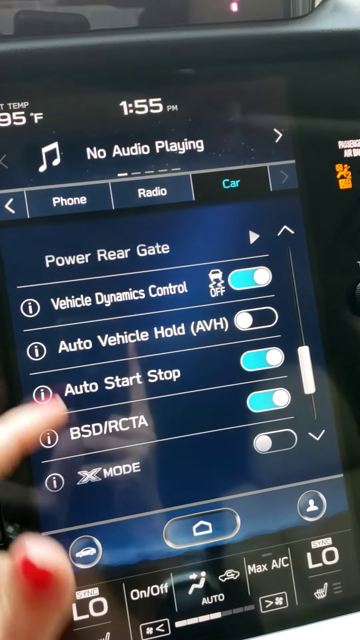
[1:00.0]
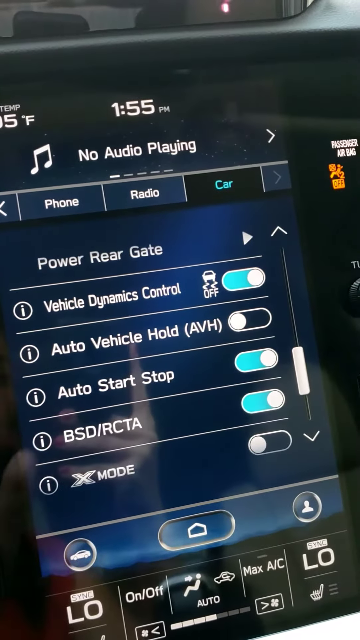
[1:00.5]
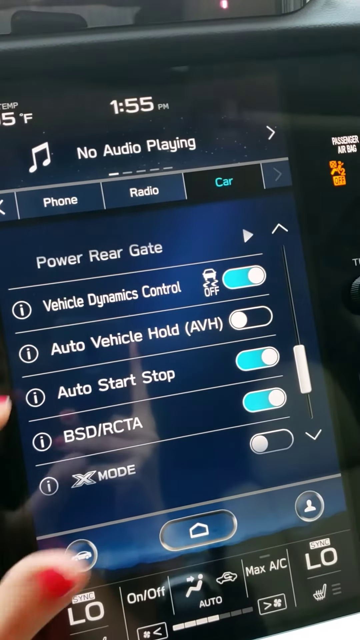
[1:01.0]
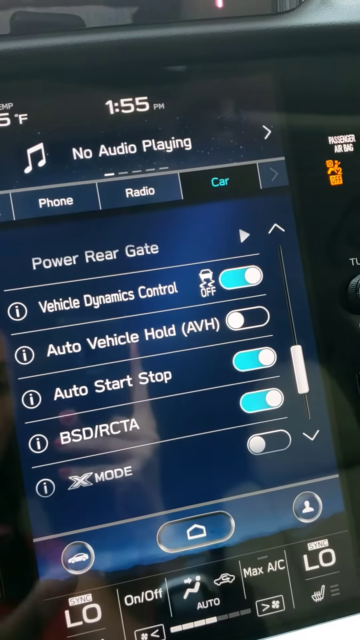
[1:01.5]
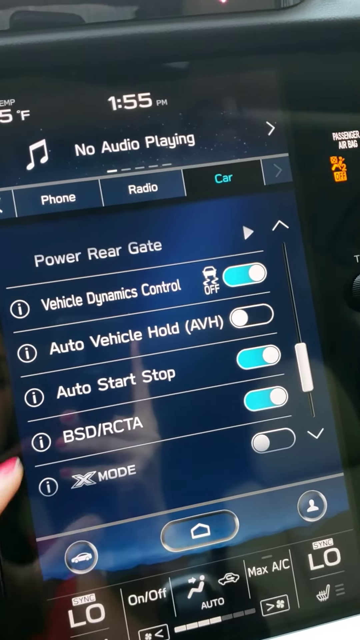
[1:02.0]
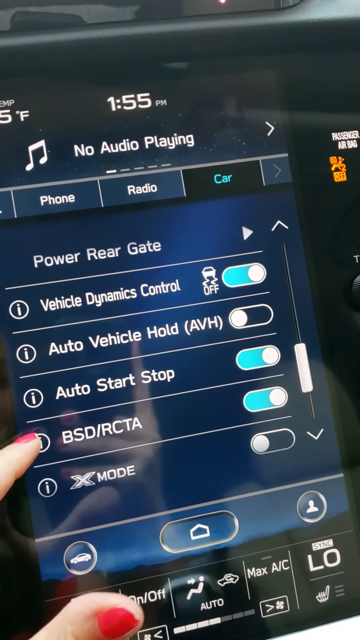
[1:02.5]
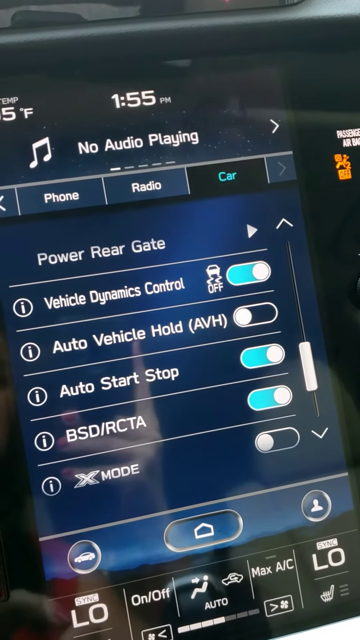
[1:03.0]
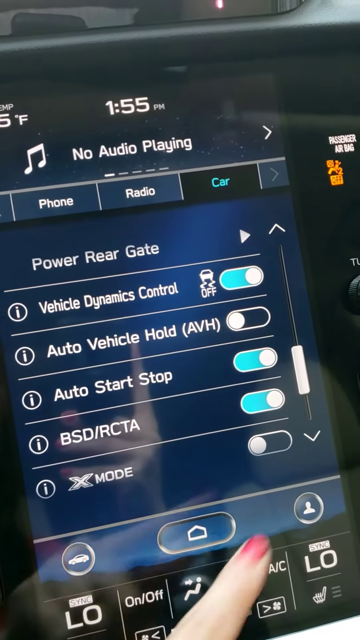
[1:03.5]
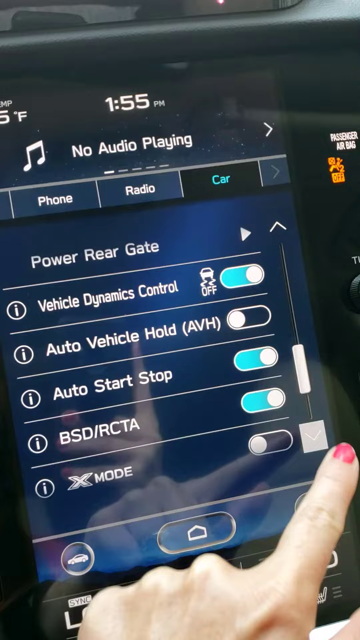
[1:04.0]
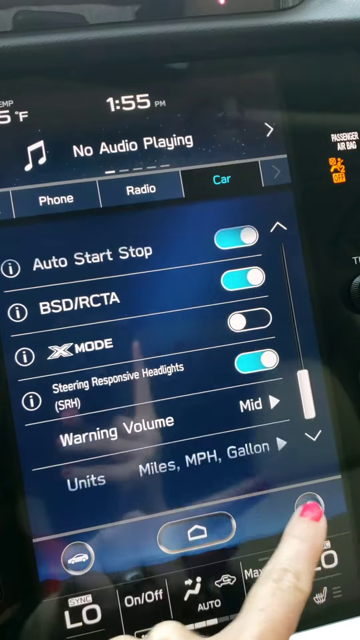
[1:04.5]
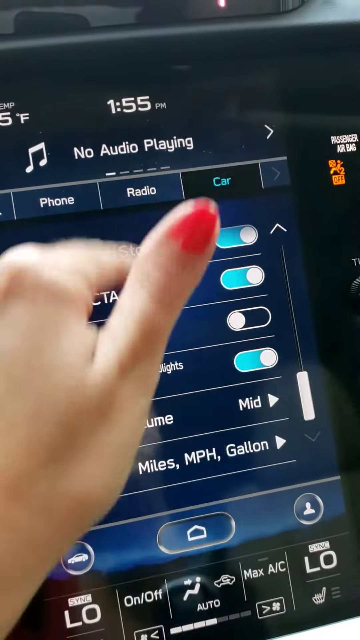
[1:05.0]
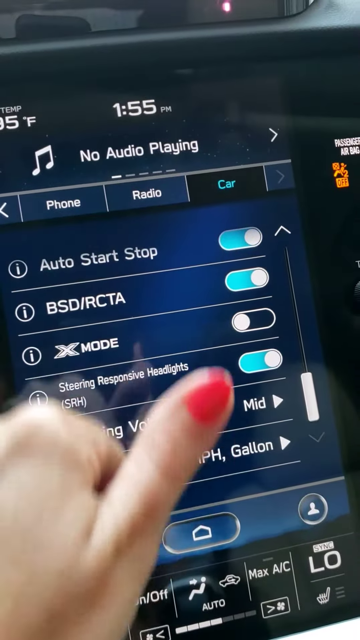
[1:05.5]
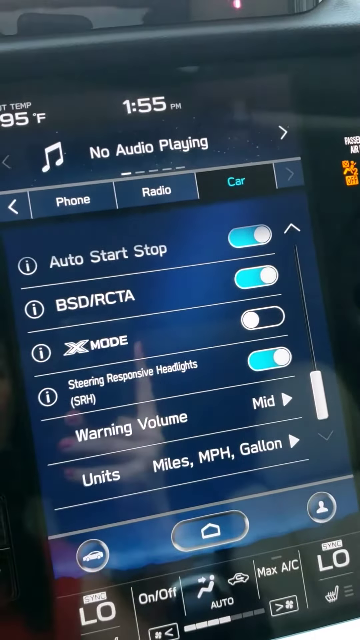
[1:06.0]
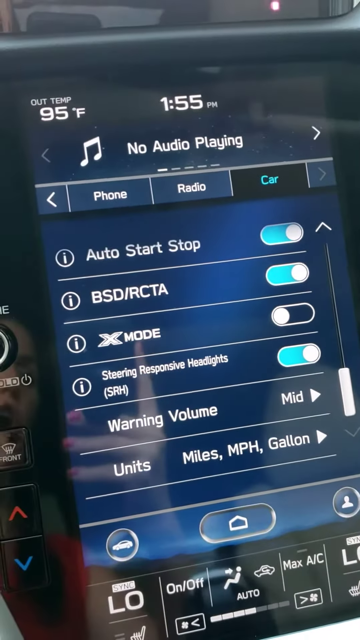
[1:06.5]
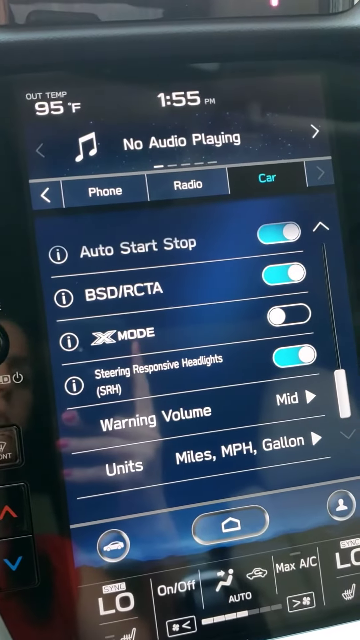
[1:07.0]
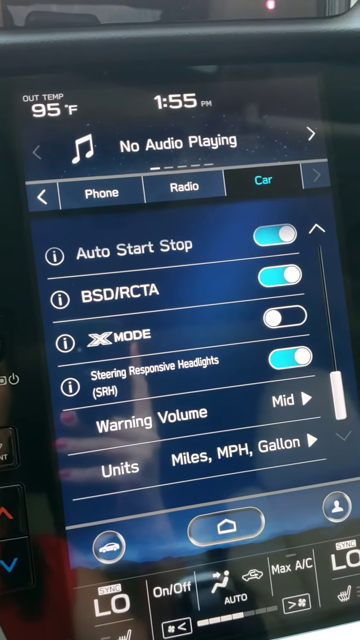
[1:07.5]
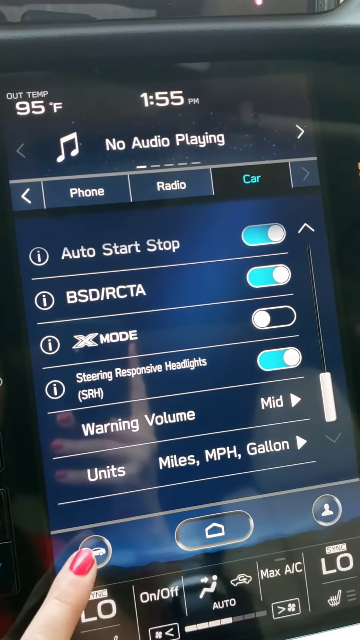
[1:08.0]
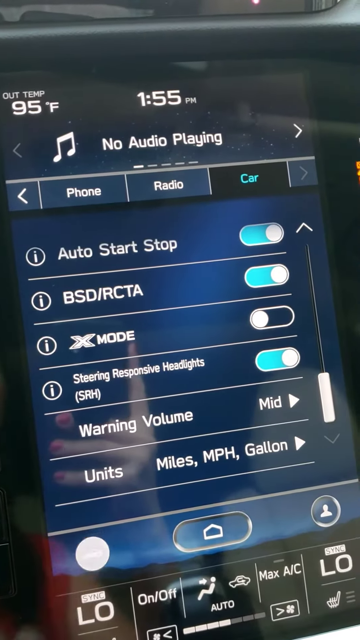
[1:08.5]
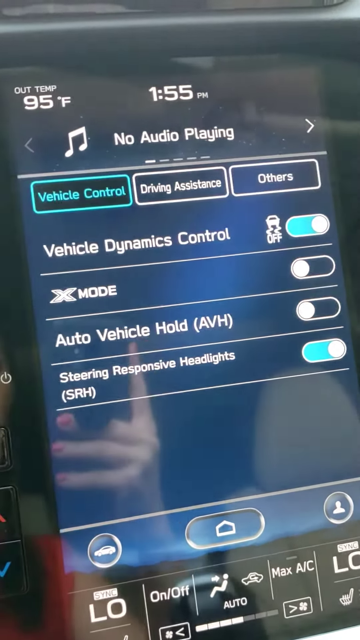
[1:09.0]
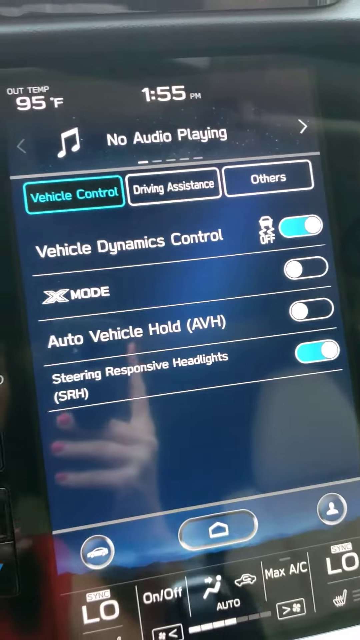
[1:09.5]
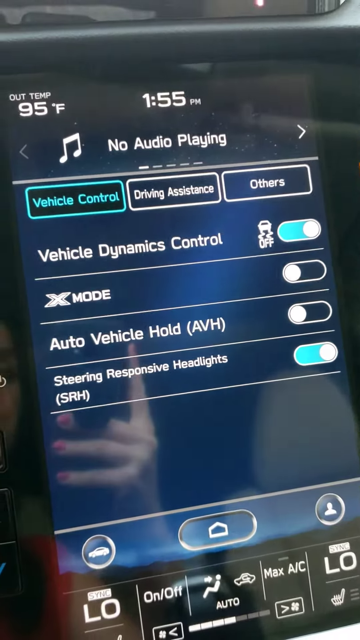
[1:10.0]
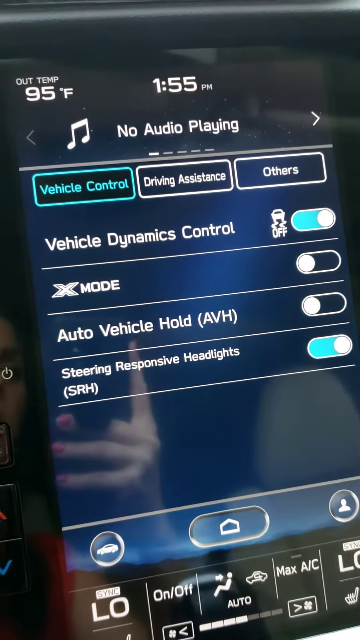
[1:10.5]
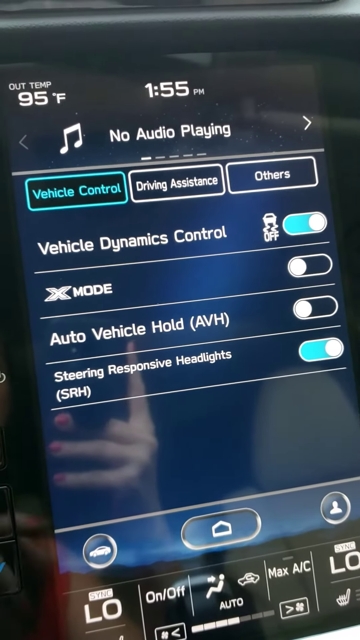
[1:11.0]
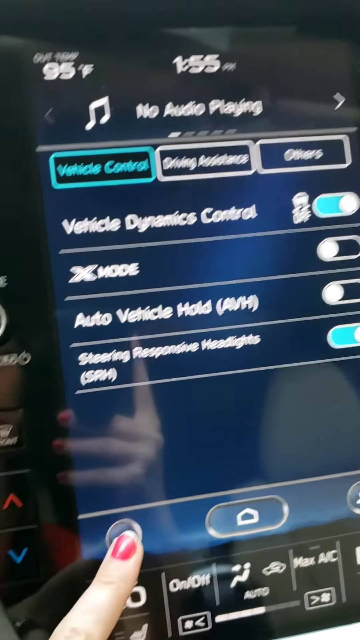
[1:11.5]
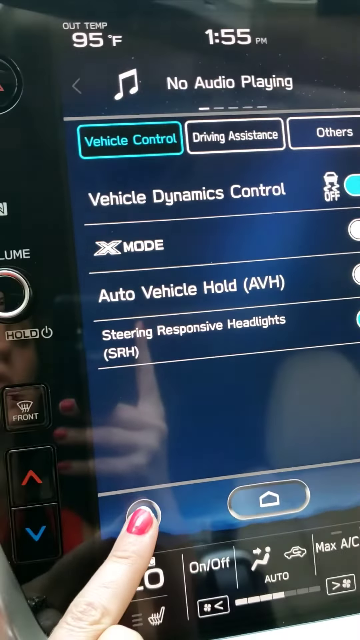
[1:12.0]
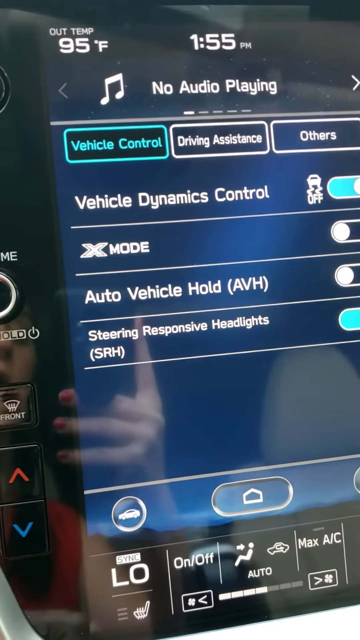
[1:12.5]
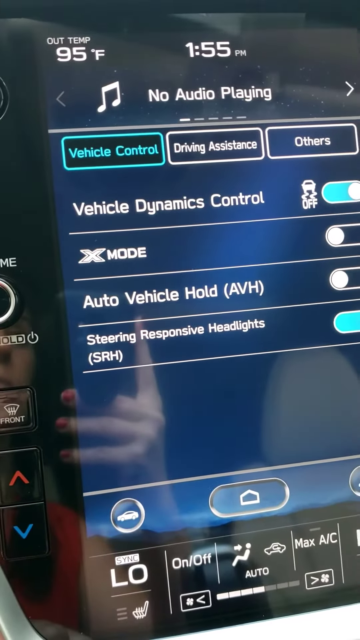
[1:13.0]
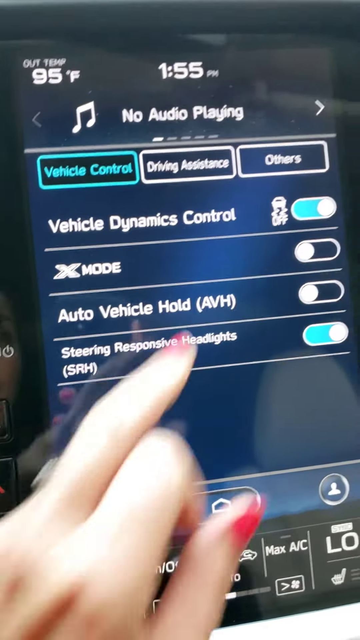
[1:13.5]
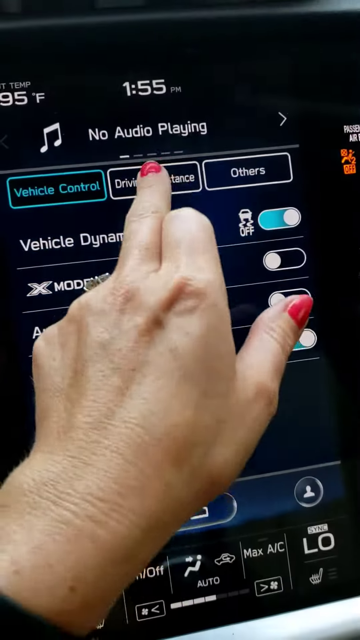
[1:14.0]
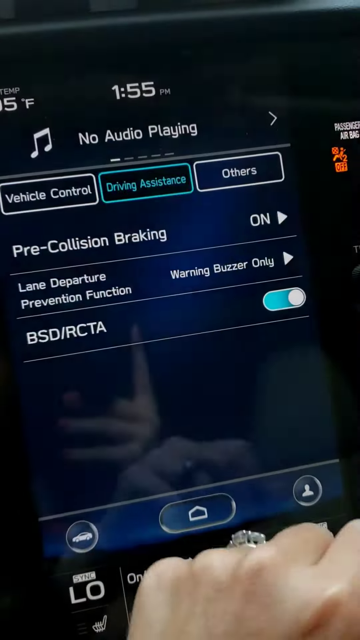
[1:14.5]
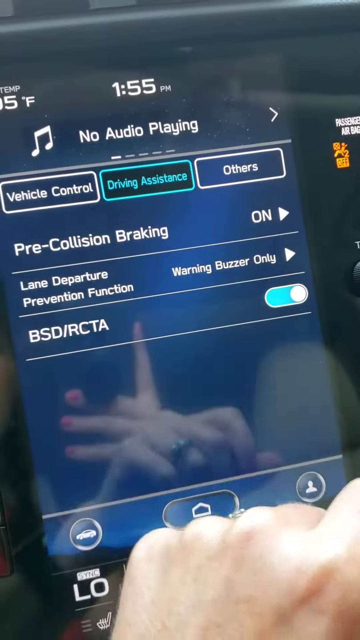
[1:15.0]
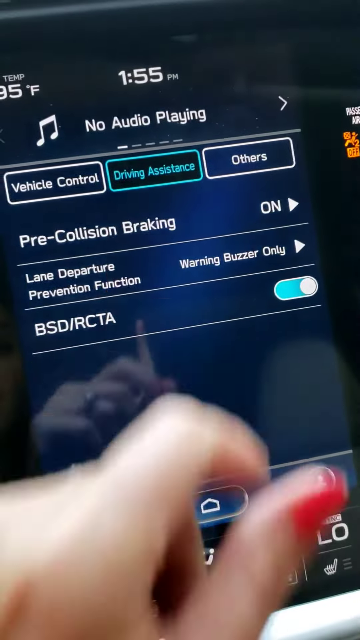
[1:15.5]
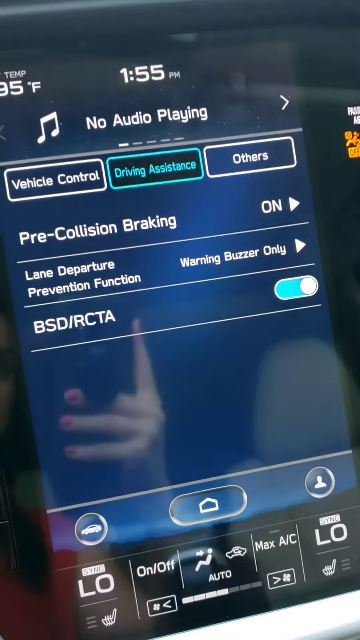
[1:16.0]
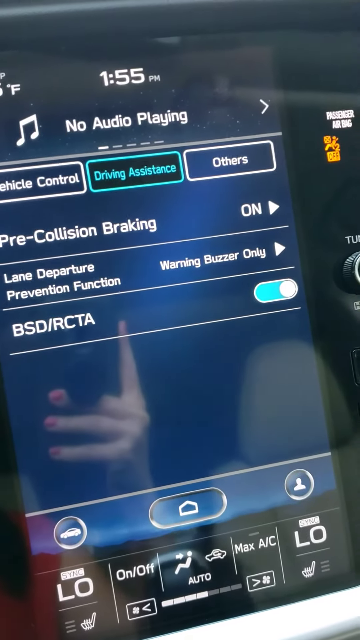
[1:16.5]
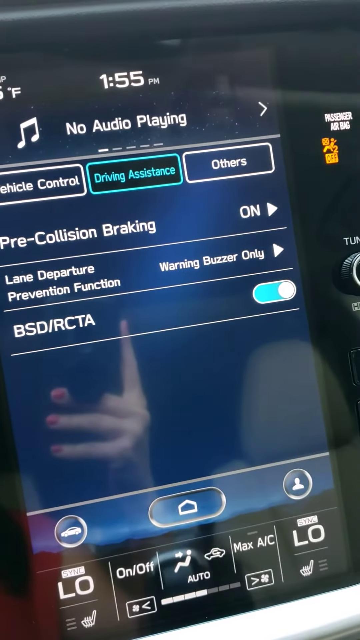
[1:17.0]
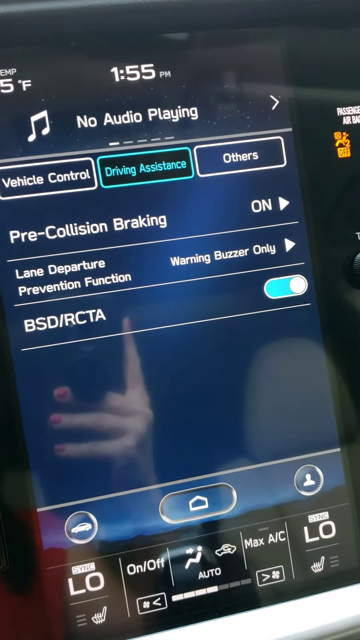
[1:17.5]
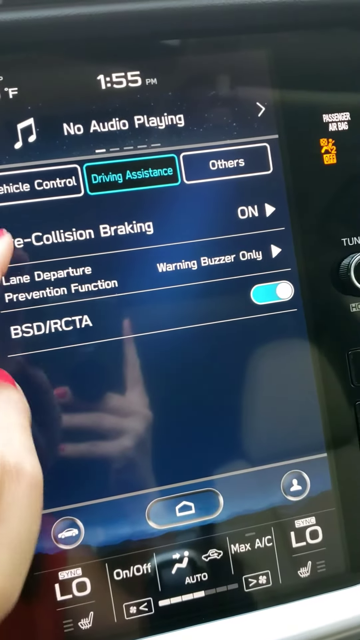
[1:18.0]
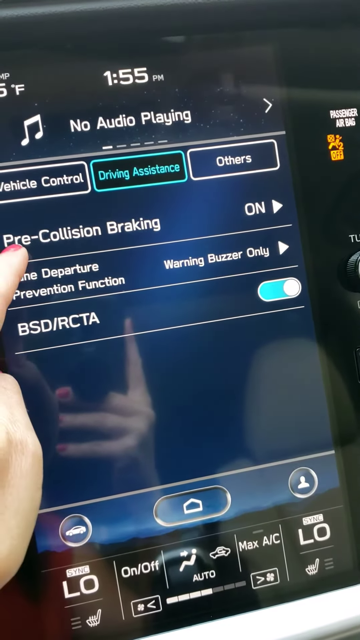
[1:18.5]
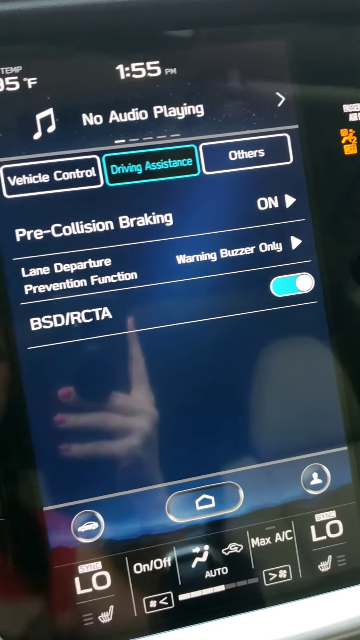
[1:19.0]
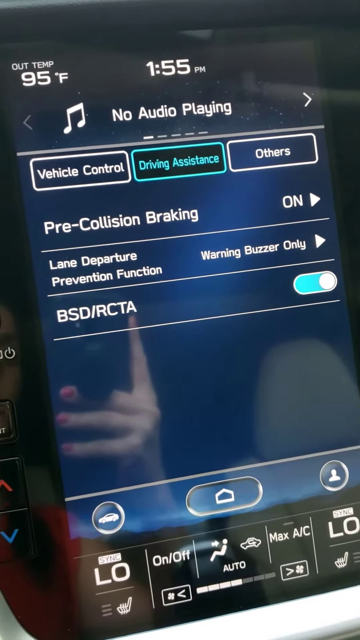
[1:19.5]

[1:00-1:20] A woman with pink nail polish sits in her car touching a touchscreen with her left hand while clearly holding something in her right hand. She wears a diamond ring on her left hand; her ring finger and part of her face are visible. She occasionally leans over and looks at what she is holding. Her index finger is up along the object, which is long and black, and there appears to be a little clip around her middle finger, with her remaining three fingers holding the object up. As she keeps clicking and scrolling on the other screen, it shows "95 degrees," "no audio playing," and "1.55 PM." She then hits driving assistance and looks through its options.